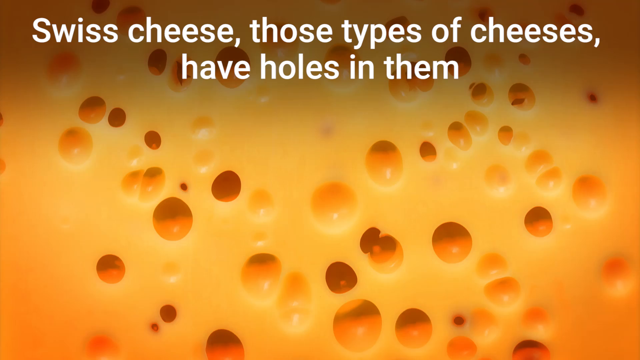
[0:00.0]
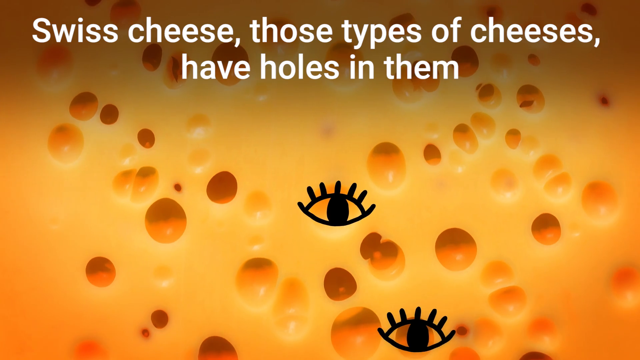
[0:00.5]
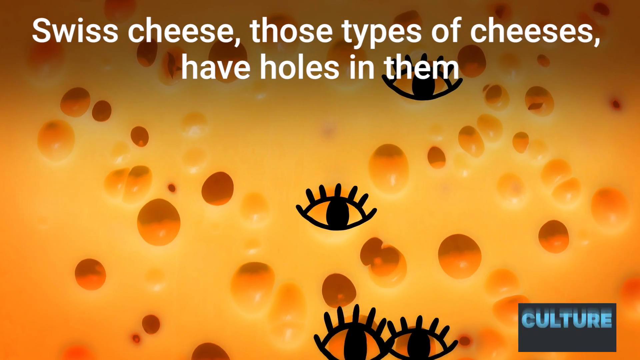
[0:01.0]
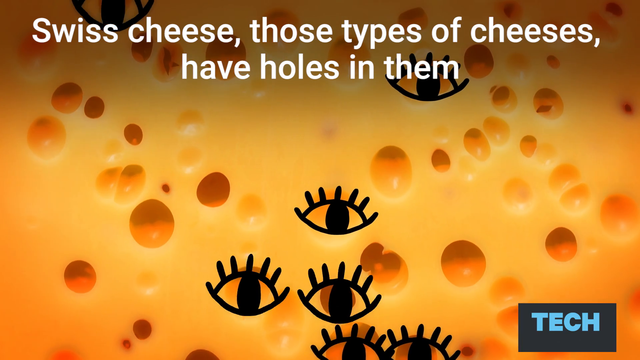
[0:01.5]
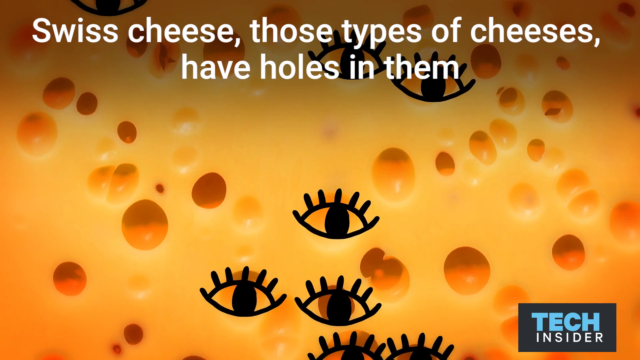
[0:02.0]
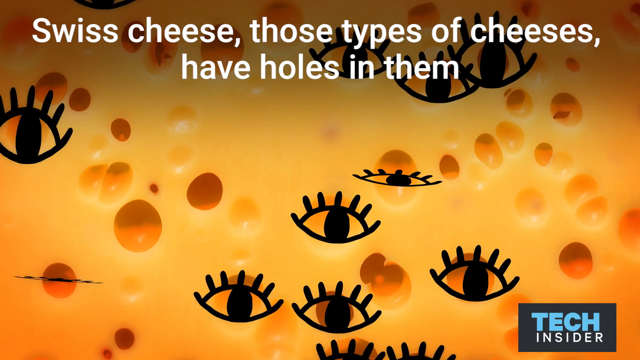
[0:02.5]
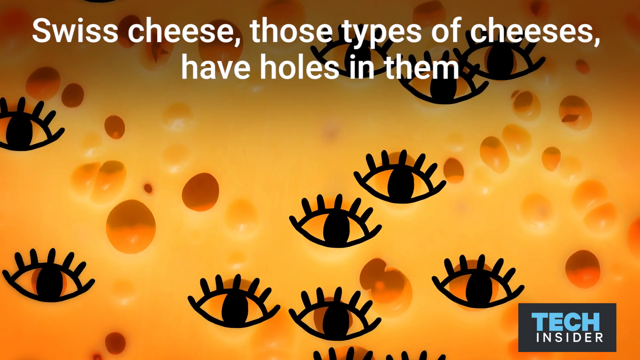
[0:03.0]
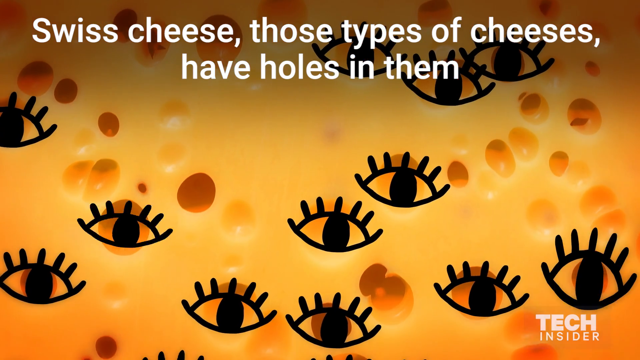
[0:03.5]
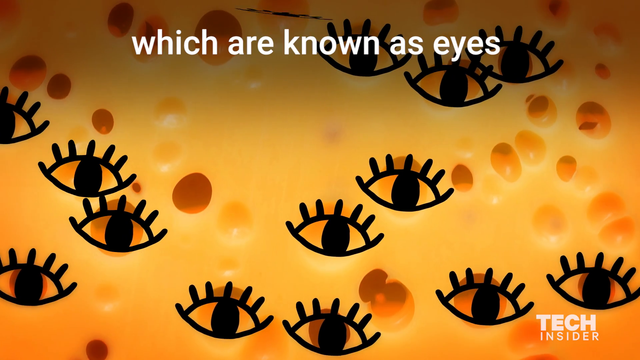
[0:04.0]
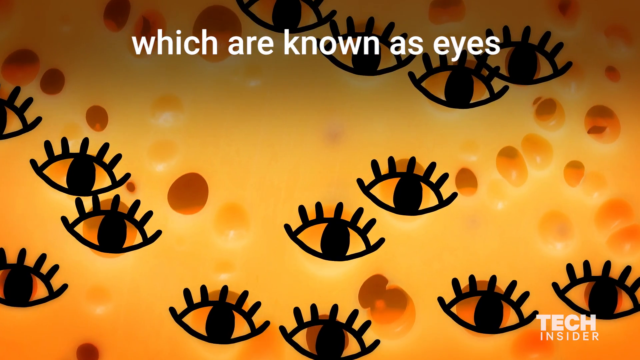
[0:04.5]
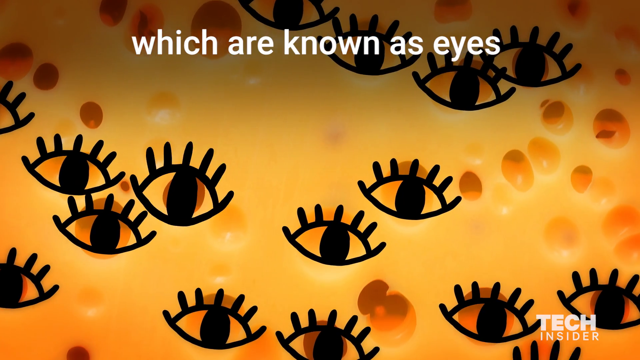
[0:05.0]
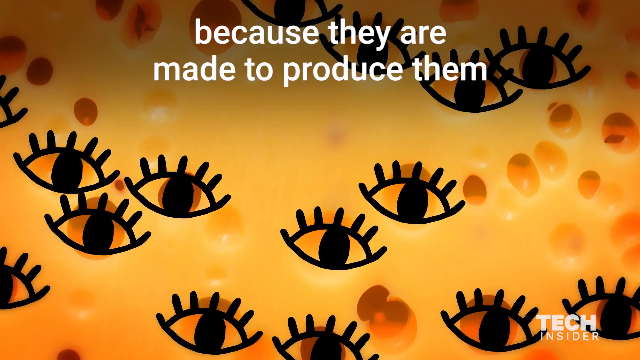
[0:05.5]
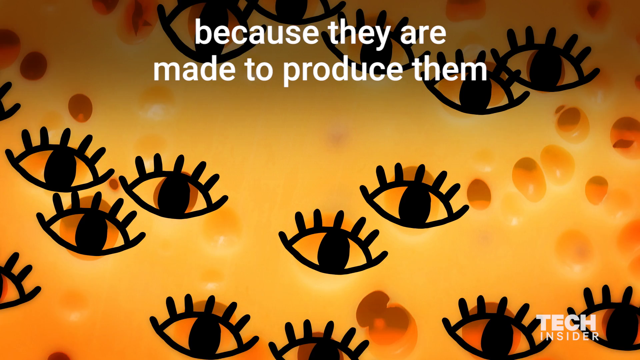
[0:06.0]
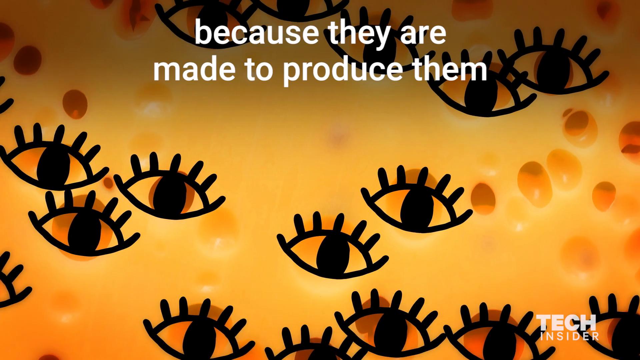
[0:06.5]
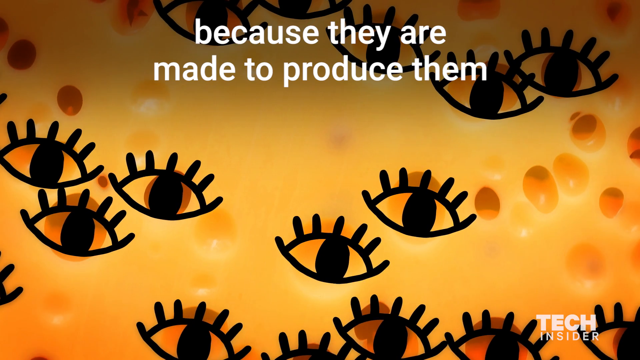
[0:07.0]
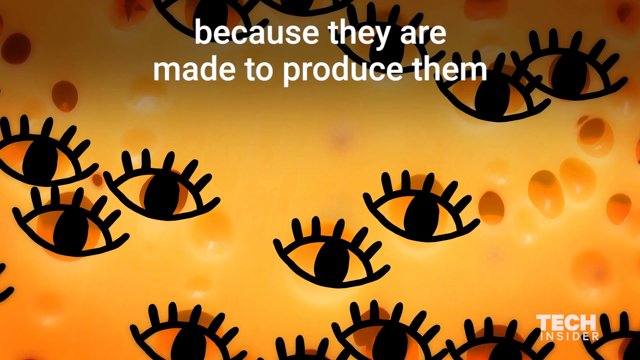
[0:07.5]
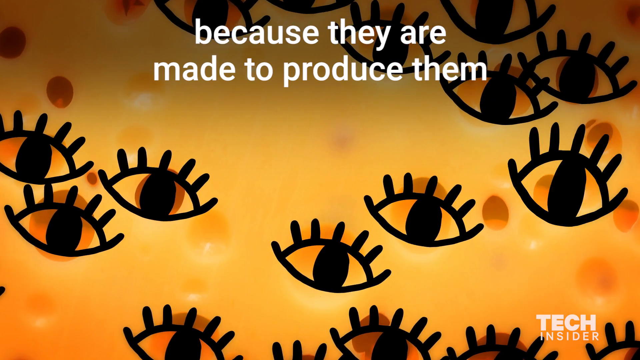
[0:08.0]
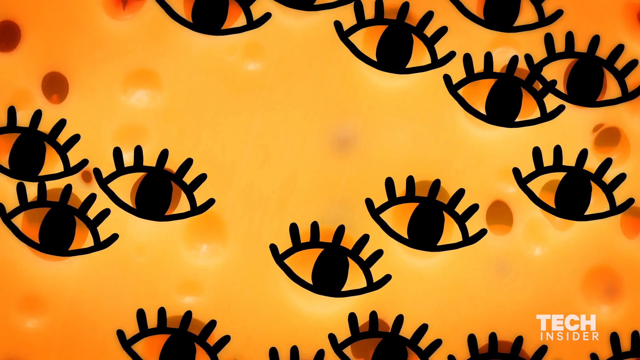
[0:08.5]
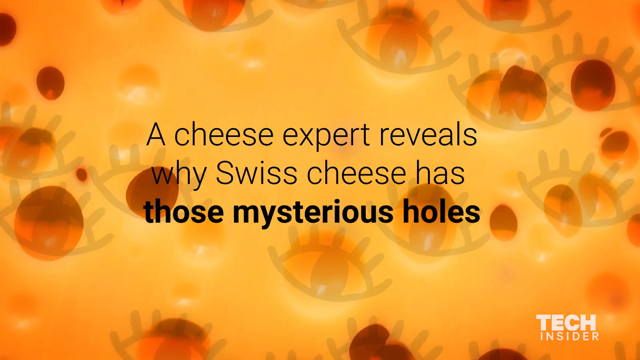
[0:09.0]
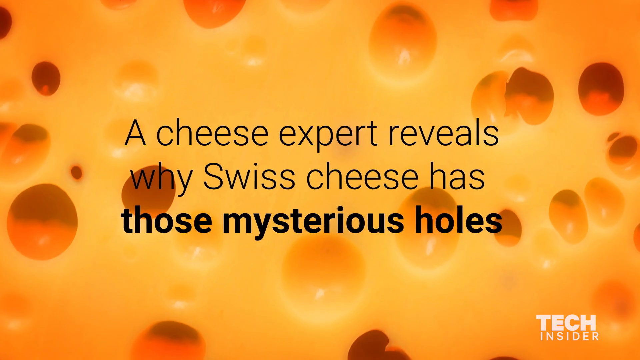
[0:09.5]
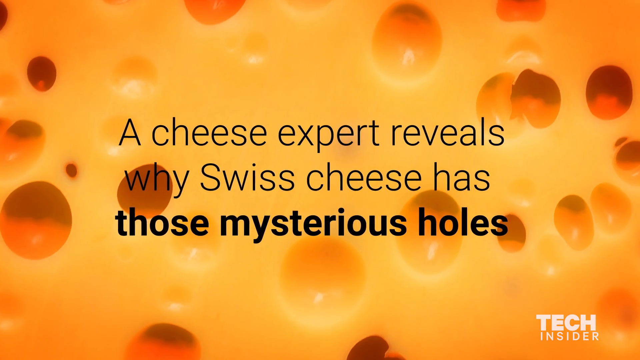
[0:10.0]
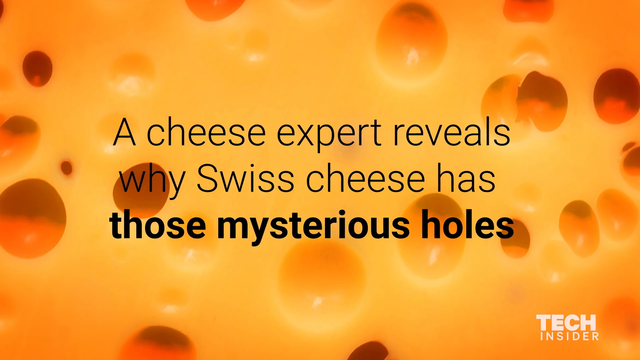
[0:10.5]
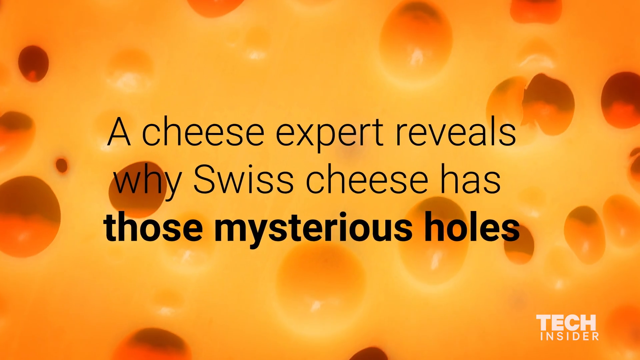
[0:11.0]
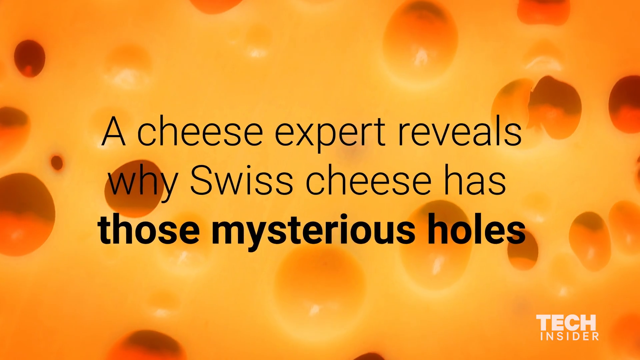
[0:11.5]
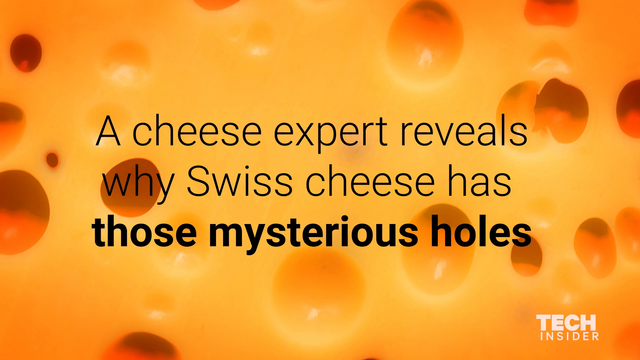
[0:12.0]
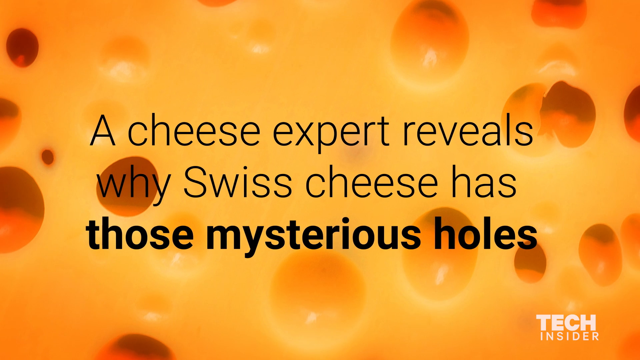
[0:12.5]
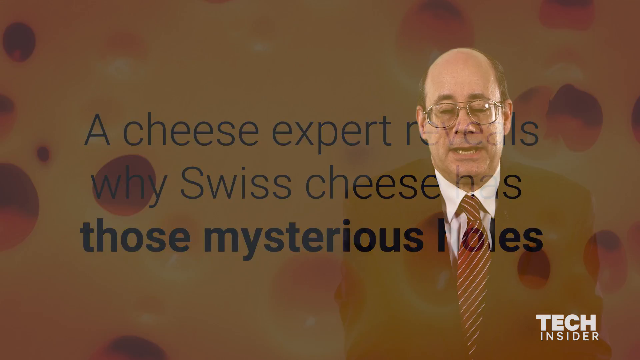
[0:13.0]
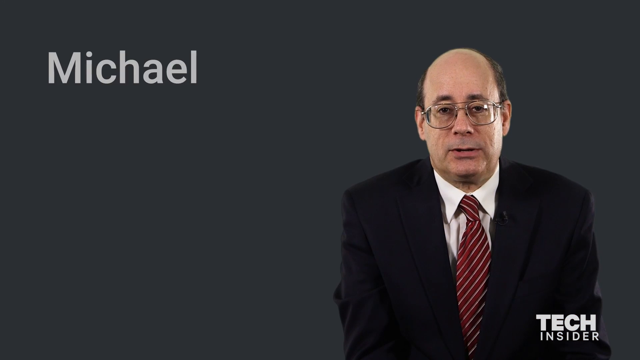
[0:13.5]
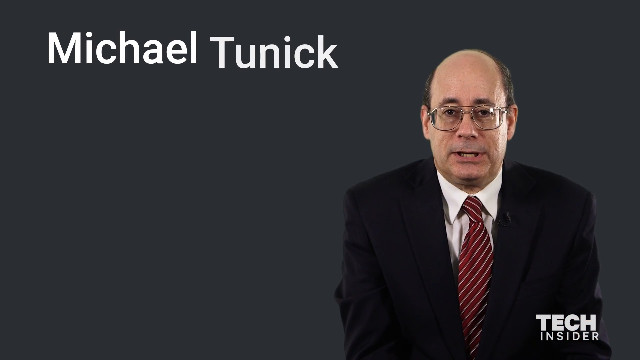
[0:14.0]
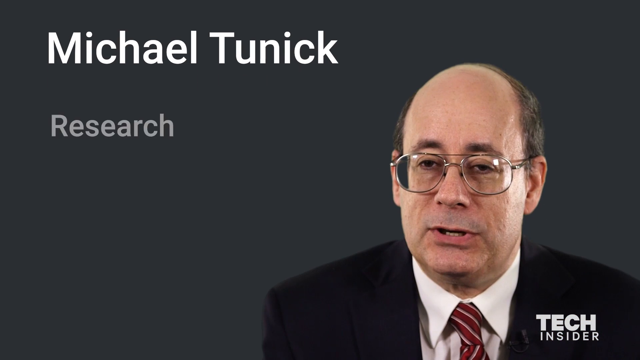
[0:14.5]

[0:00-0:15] A very large piece of yellow cheese with a lot of holes in it is shown, followed by an animation of eyeballs with eyelashes. Writing on the screen says: "Swiss cheese those types of cheeses have holes in them which are known as eyes because they are made to produce them." Text also reads "A cheese expert reveals why Swiss cheese has those mysterious holes." Michael Tunick, a research chemist, speaks to the camera. He is well-dressed in a suit with a striped tie, wears glasses, has dark hair, and looks like a very smart man. The screen says "insider tech" and then also "tech insider."